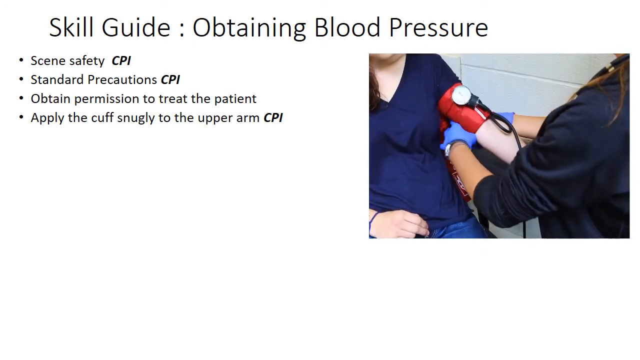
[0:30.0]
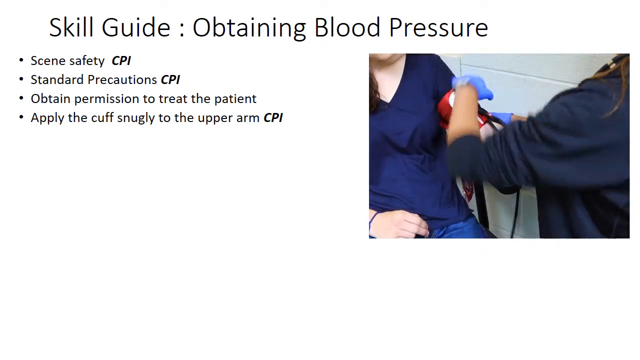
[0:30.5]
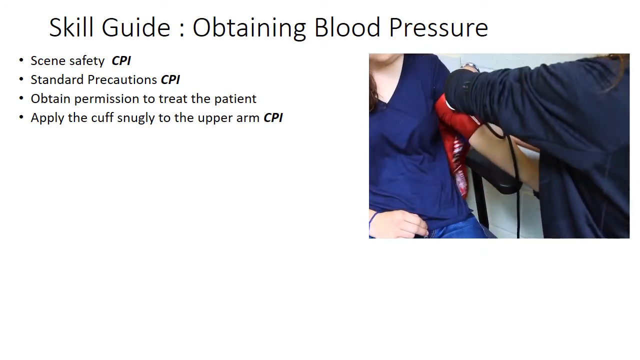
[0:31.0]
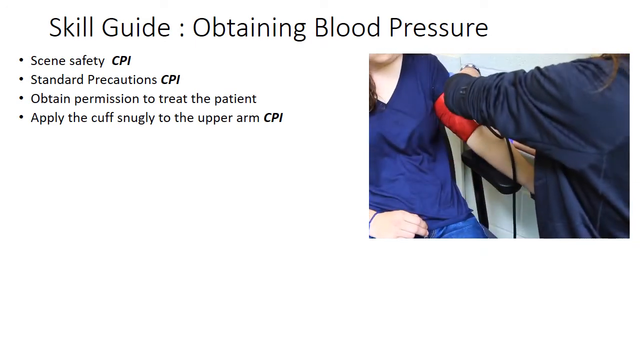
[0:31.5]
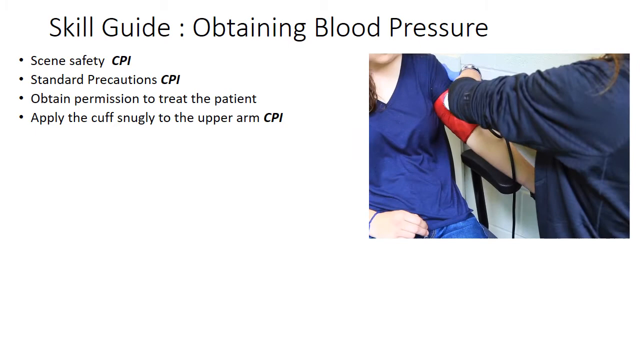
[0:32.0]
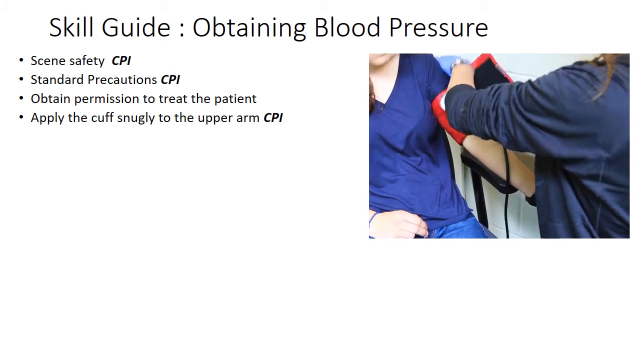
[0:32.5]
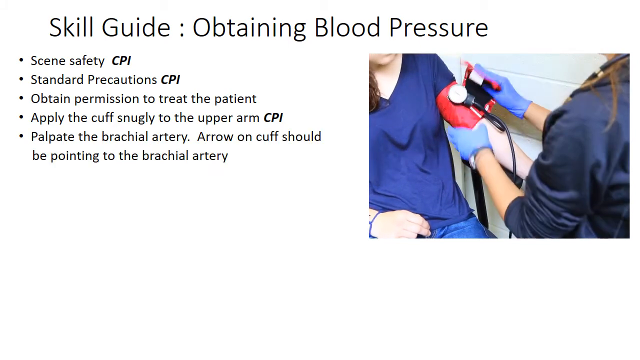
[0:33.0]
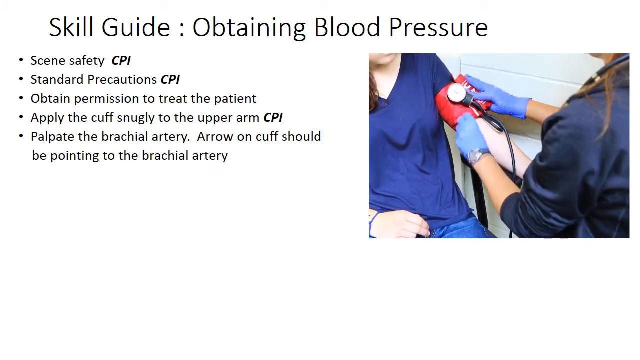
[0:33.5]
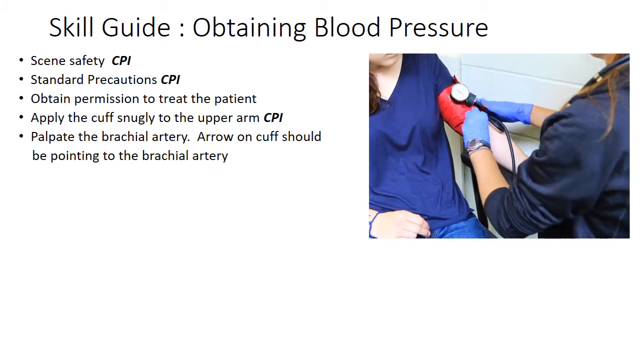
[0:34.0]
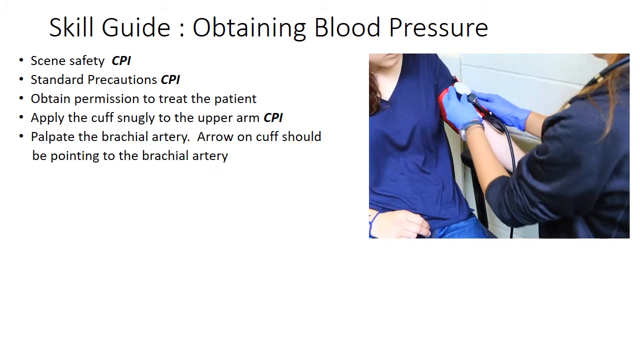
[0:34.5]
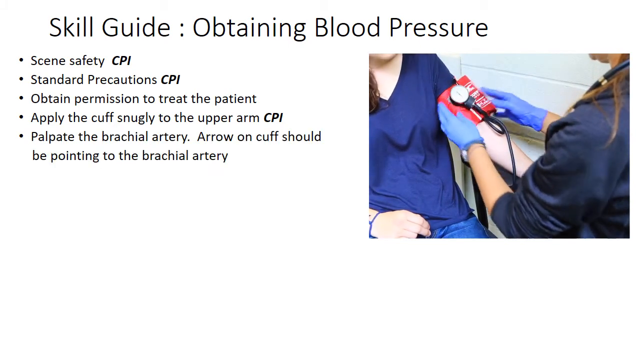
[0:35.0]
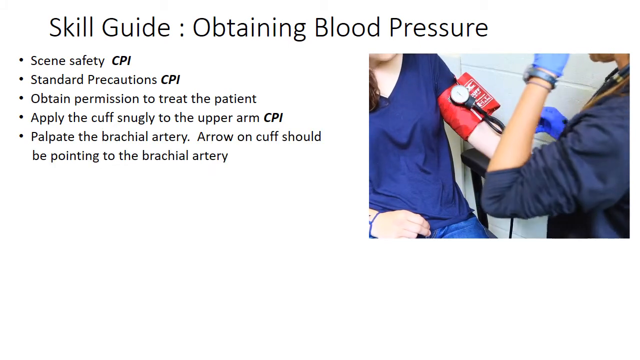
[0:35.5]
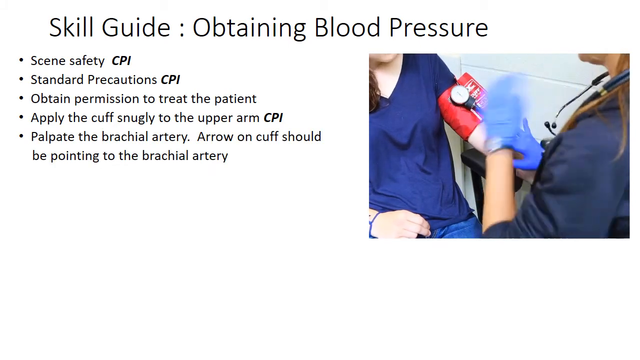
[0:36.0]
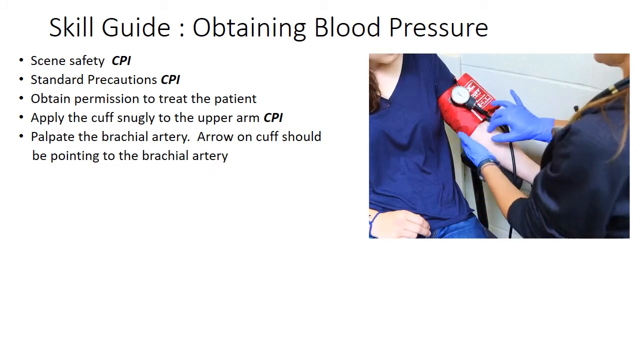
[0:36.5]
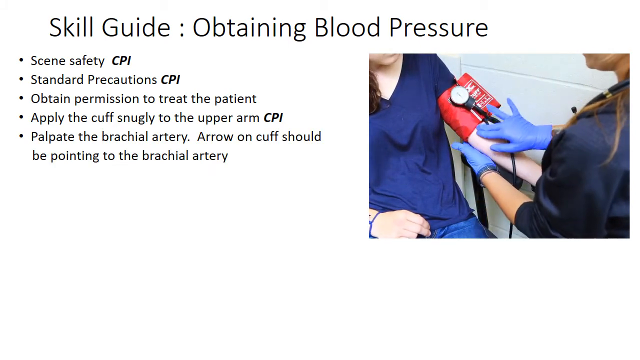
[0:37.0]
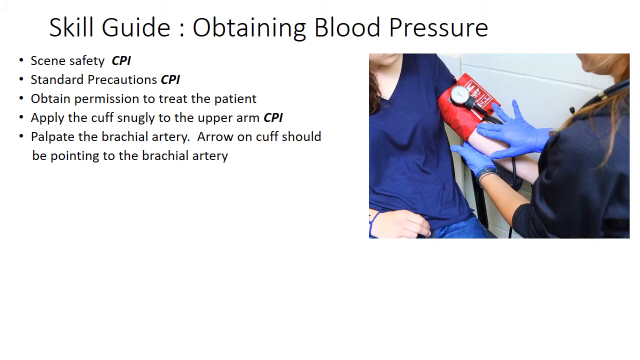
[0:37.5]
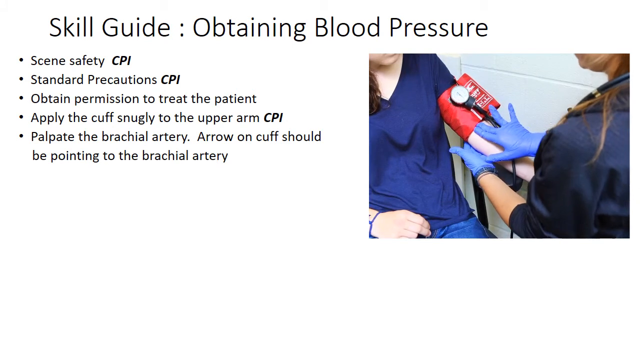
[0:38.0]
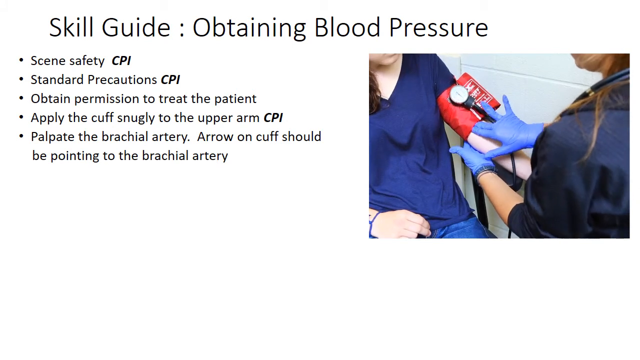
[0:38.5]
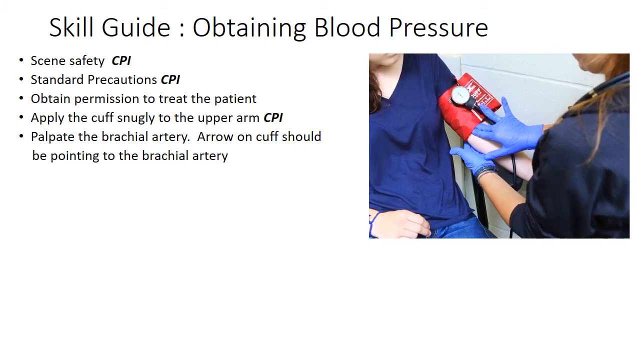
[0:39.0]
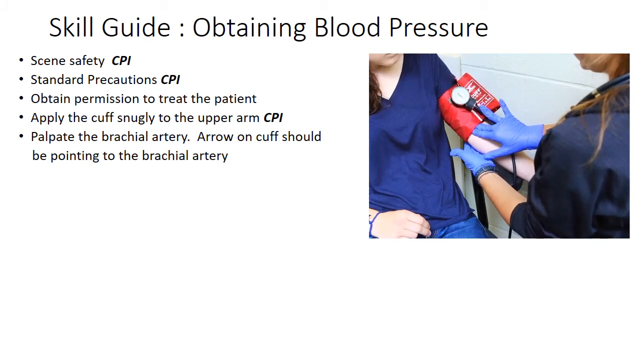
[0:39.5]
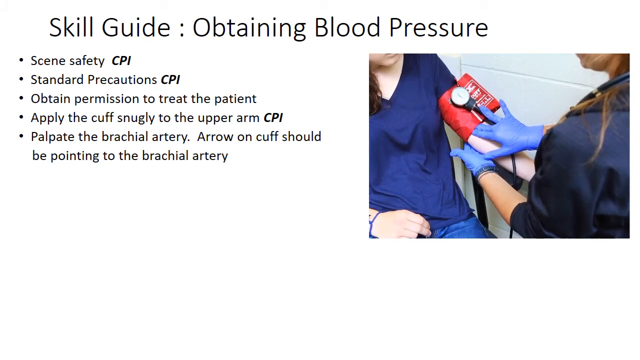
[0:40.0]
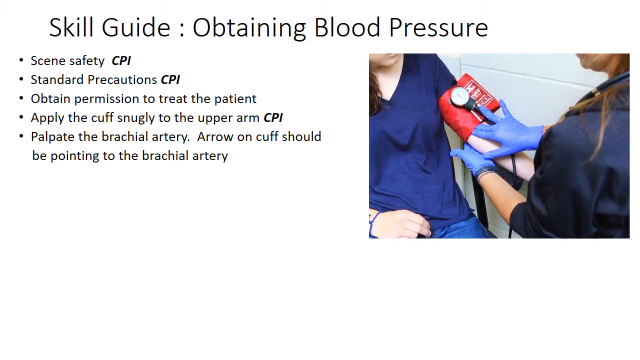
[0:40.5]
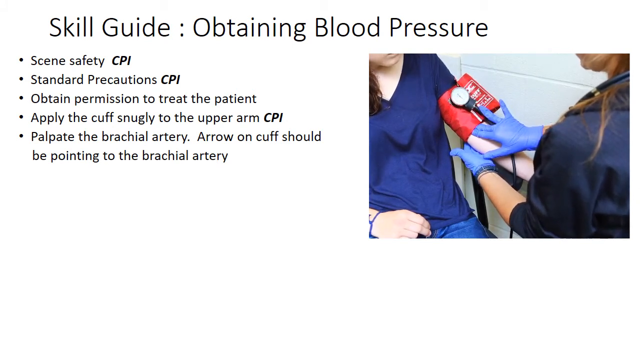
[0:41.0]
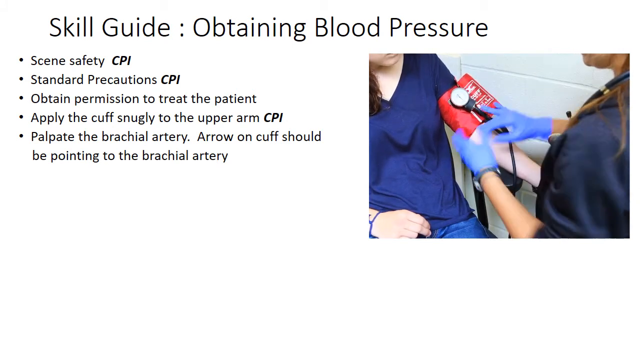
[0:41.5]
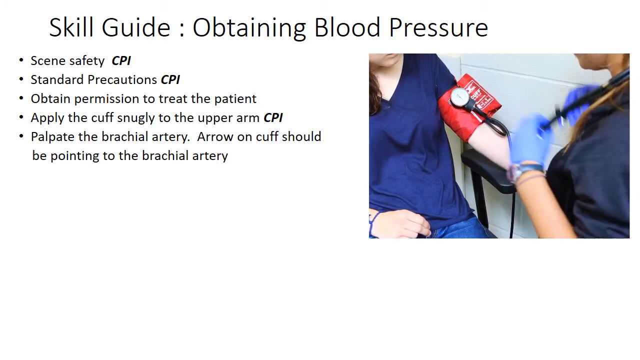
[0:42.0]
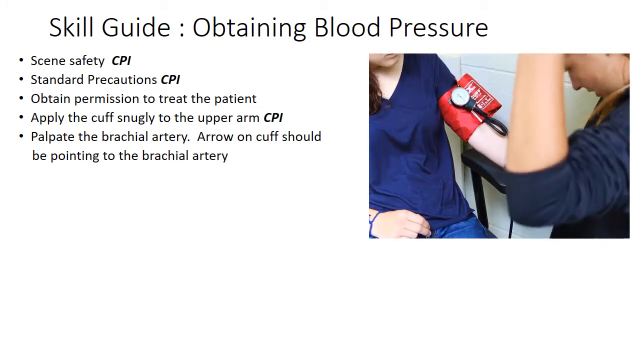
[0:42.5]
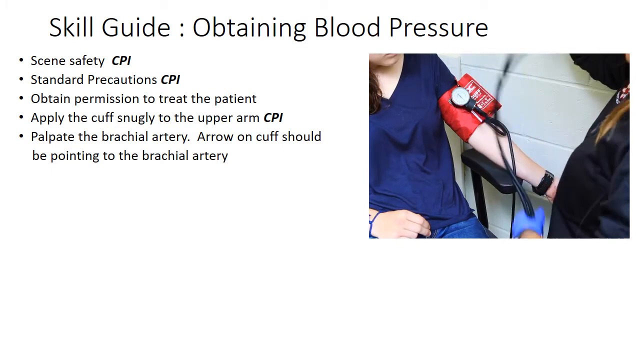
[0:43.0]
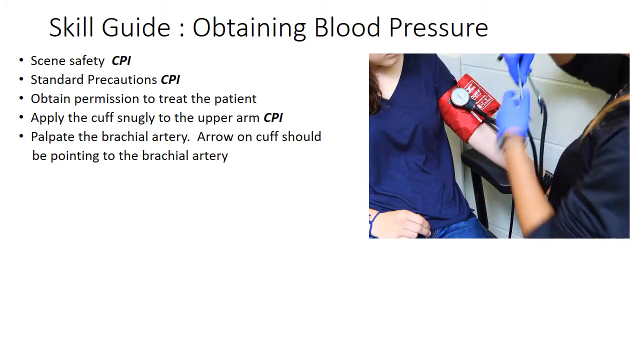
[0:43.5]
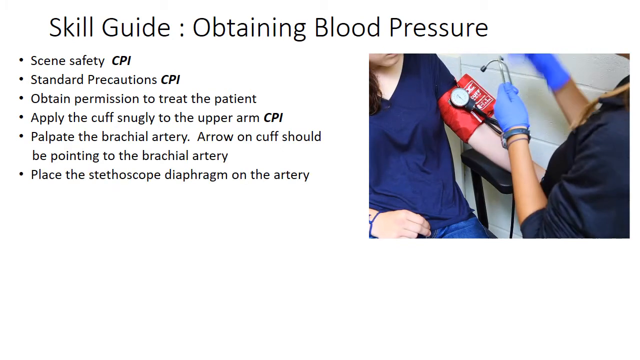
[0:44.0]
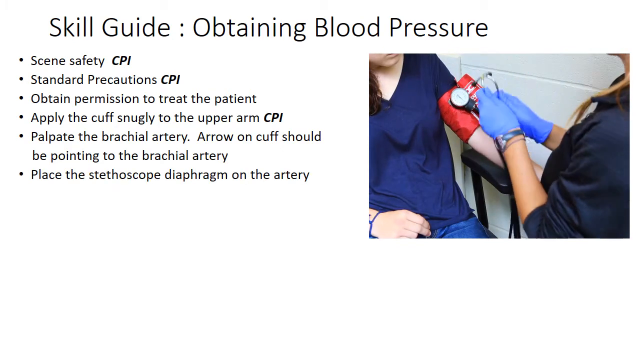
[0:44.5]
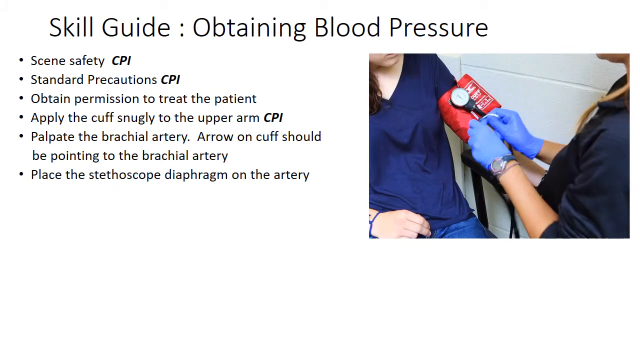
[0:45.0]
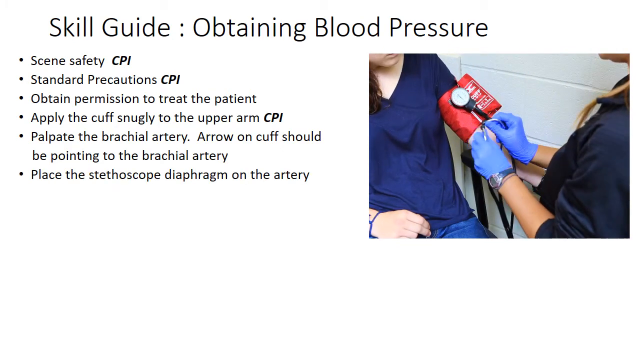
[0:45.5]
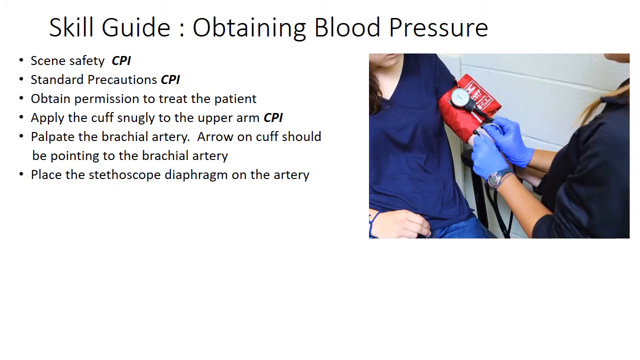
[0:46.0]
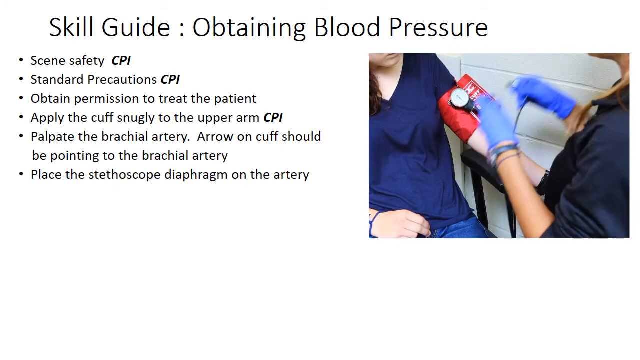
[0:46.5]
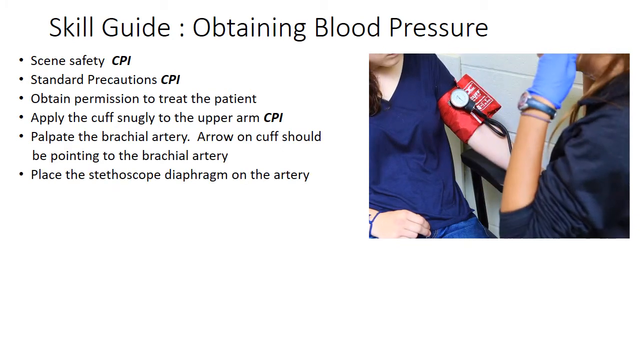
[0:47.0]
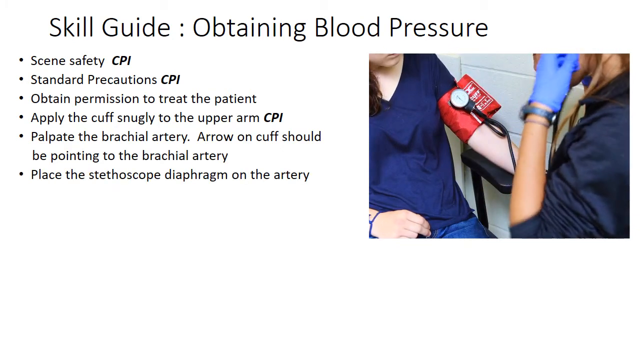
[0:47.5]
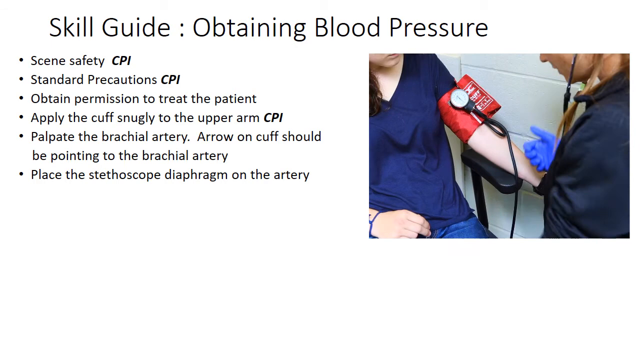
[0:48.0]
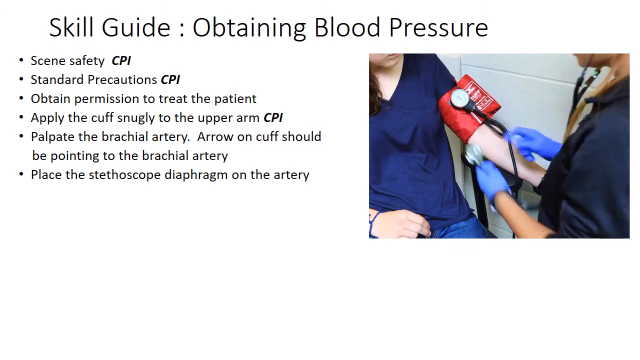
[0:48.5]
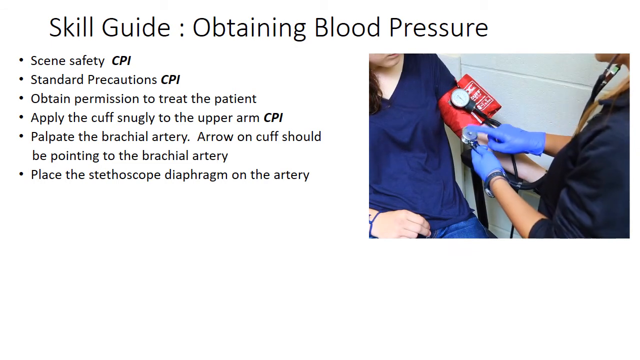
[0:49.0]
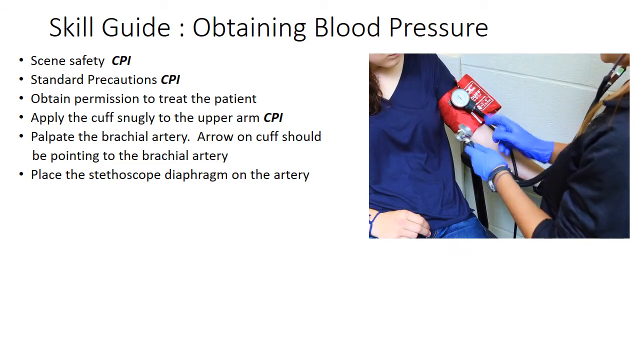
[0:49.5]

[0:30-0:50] Text at the top left of the page reads "skill guide obtaining blood pressure," followed by "scene safety CPI," "standard precautions CPI," "obtain permission to treat the patient" and "apply the cuff snugly to the upper arm CPI." In the top right corner, a person is seated in a V-neck t-shirt and jeans. Across from this person is someone in a black shirt whose hands are gloved in blue latex gloves; she has her hands around the top of the seated person's arm, which has a red blood pressure cuff attached. She makes sure the cuff fits snugly, then takes the person's pulse. She then takes off her stethoscope, adjusts it and puts it on the person's arm behind the blood pressure cuff.